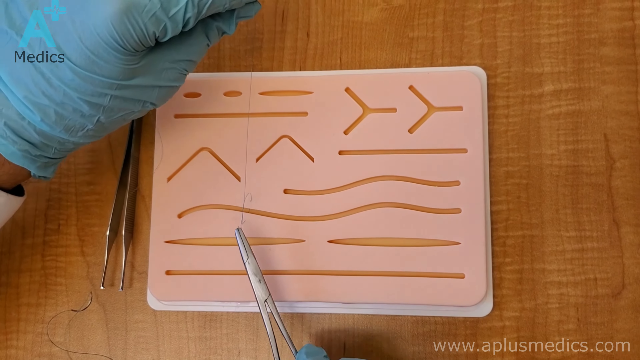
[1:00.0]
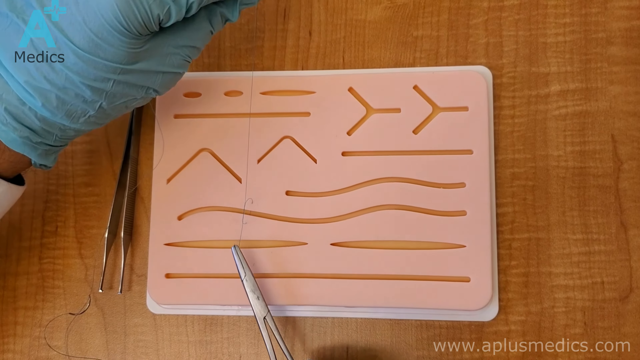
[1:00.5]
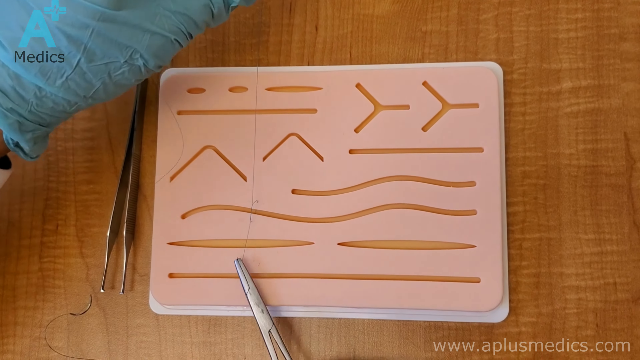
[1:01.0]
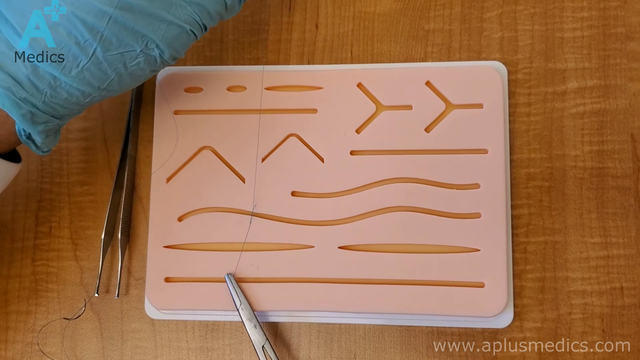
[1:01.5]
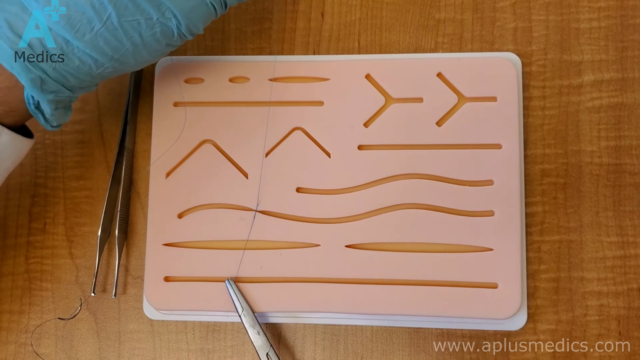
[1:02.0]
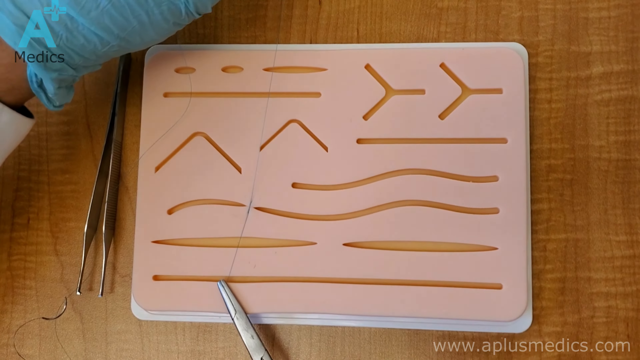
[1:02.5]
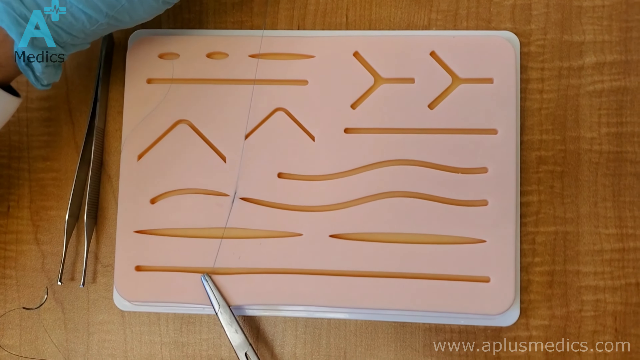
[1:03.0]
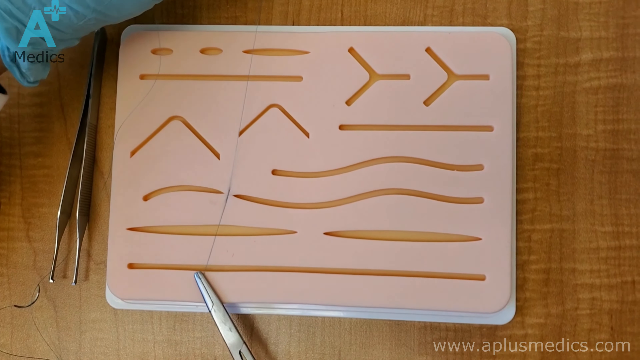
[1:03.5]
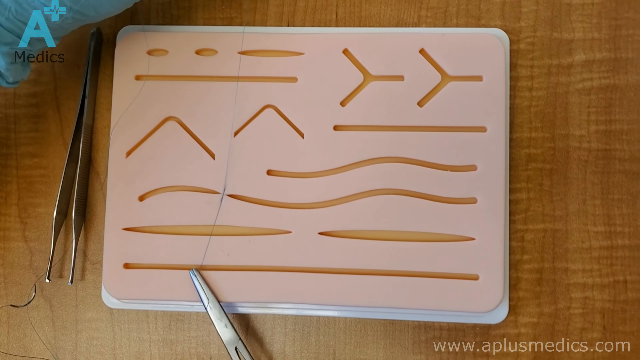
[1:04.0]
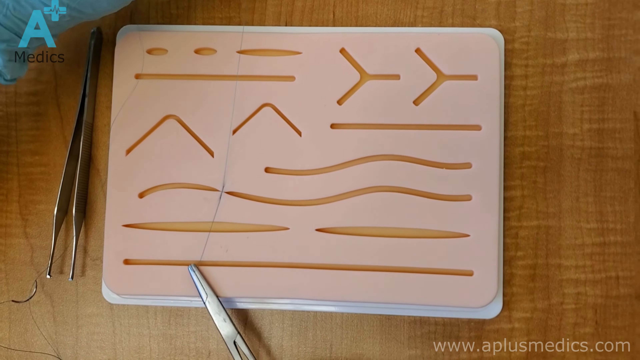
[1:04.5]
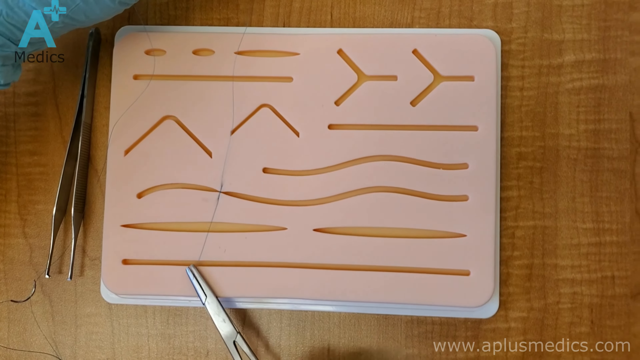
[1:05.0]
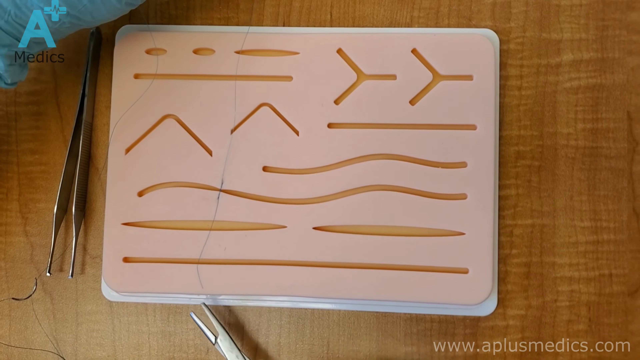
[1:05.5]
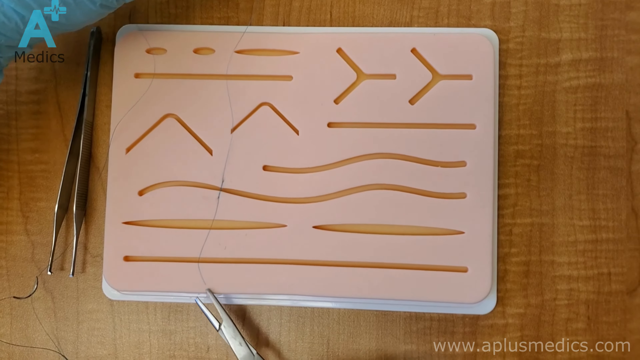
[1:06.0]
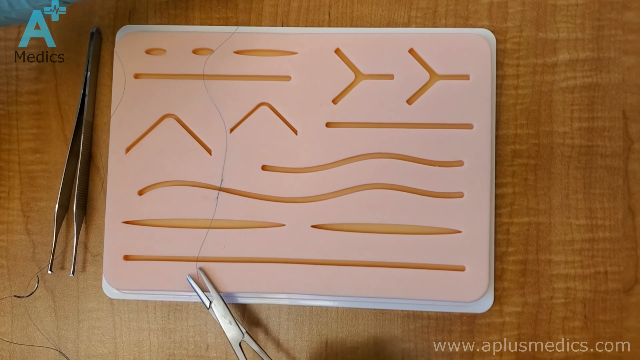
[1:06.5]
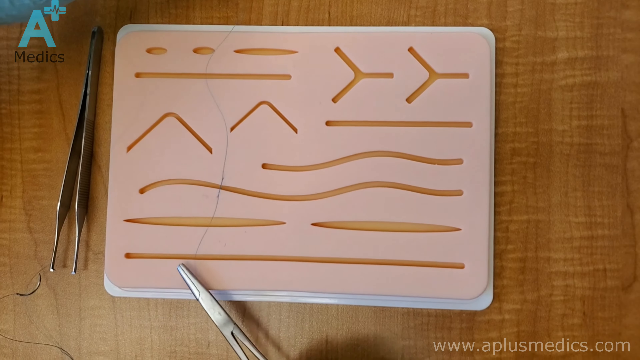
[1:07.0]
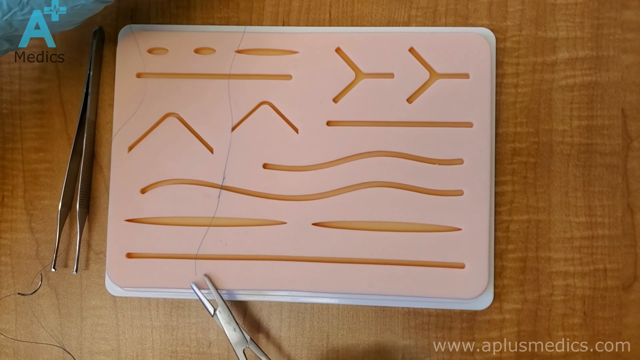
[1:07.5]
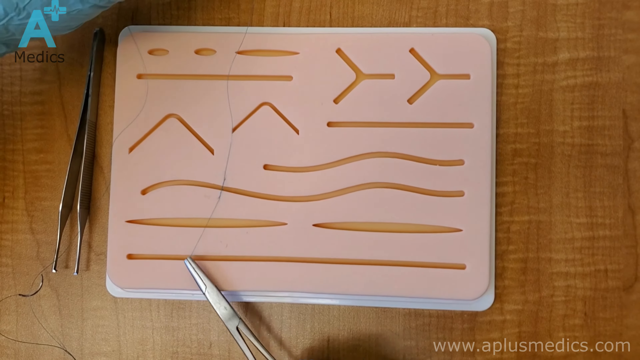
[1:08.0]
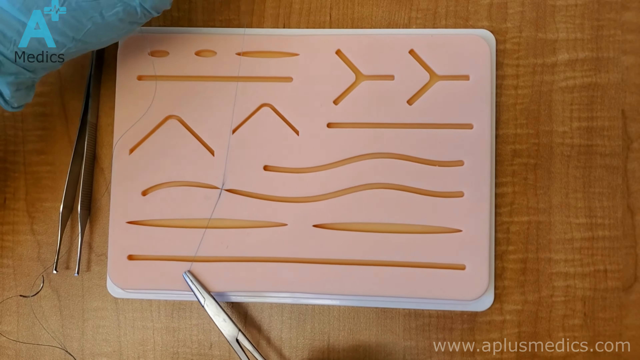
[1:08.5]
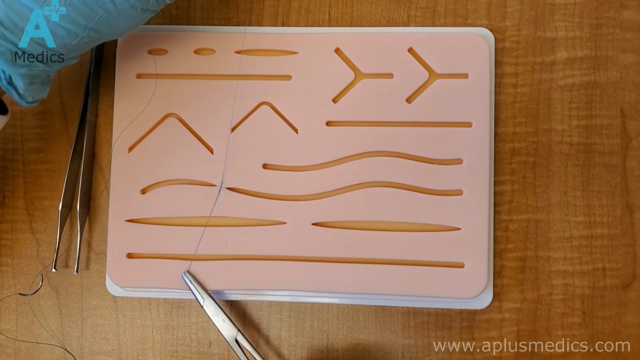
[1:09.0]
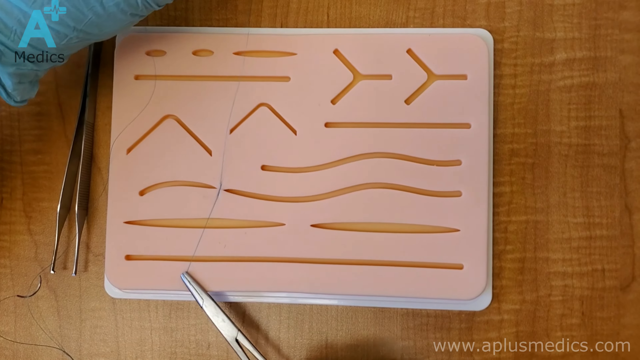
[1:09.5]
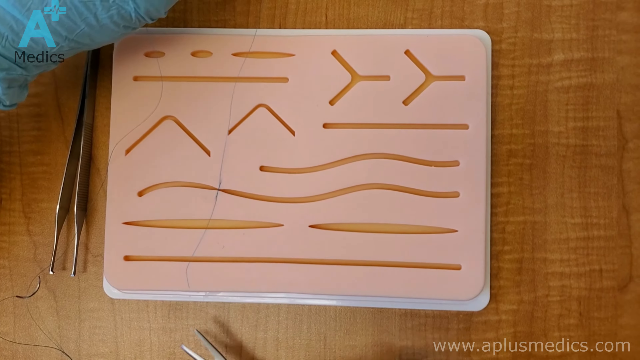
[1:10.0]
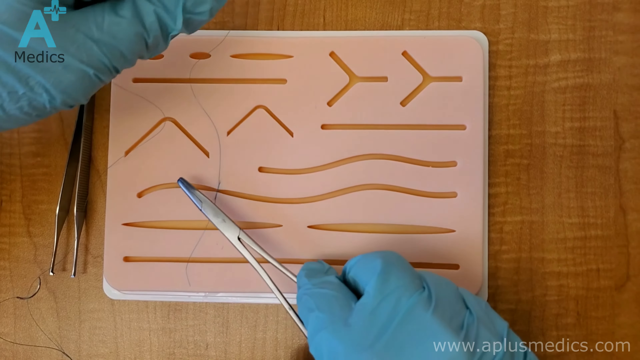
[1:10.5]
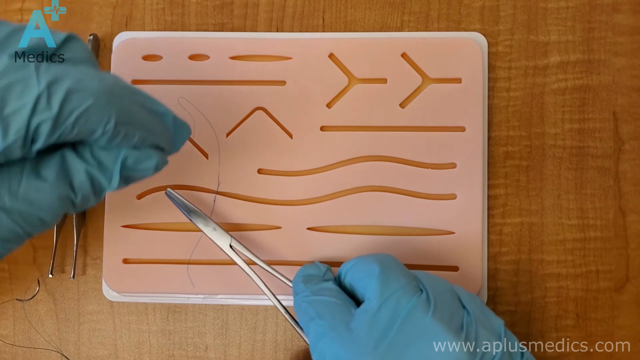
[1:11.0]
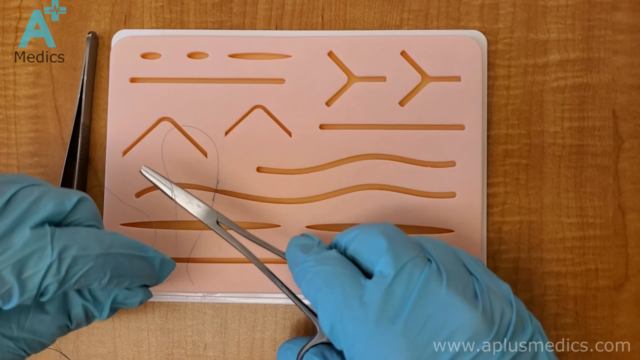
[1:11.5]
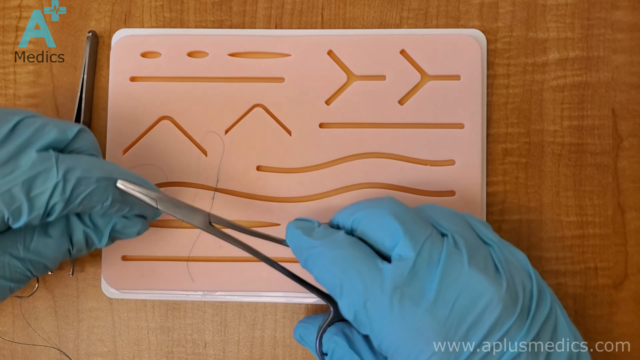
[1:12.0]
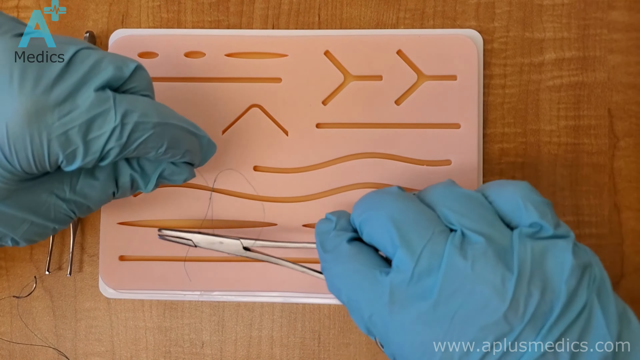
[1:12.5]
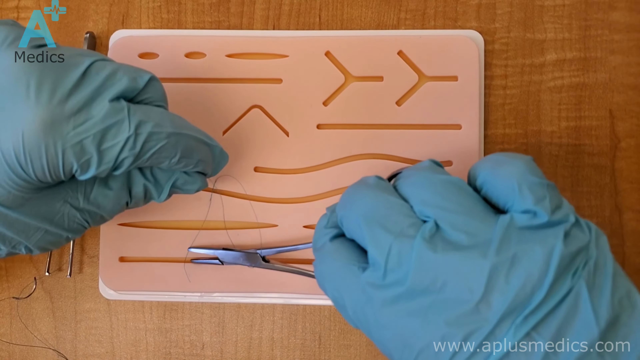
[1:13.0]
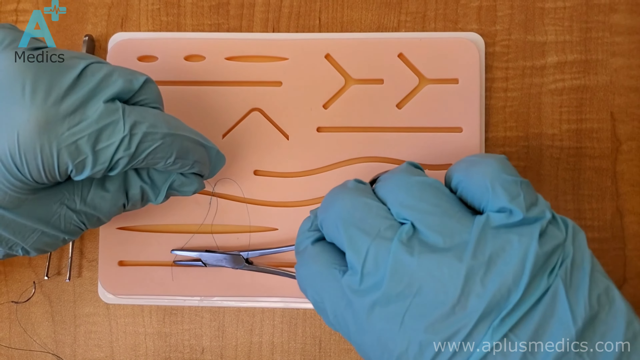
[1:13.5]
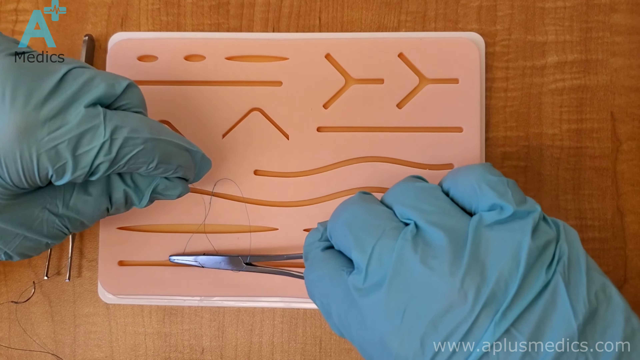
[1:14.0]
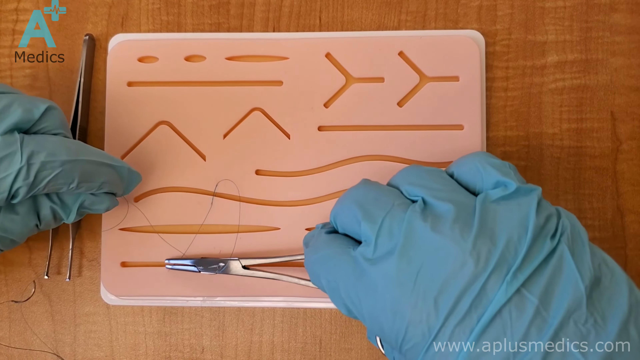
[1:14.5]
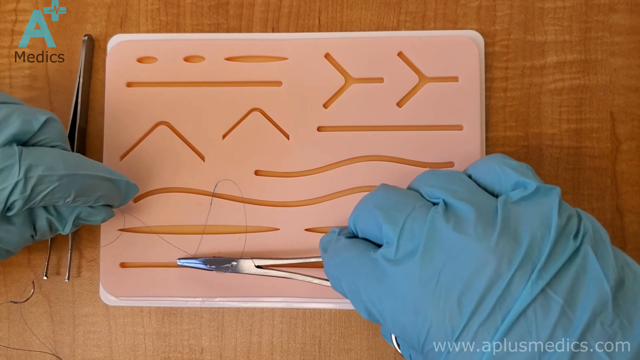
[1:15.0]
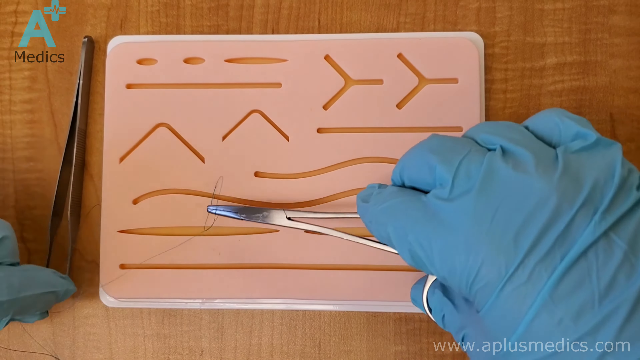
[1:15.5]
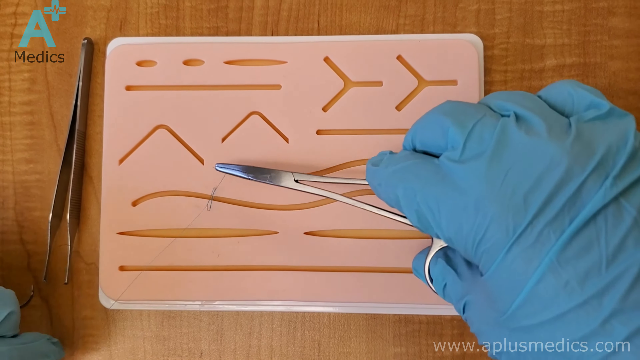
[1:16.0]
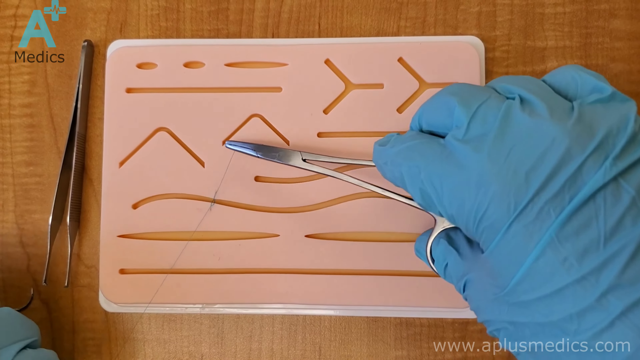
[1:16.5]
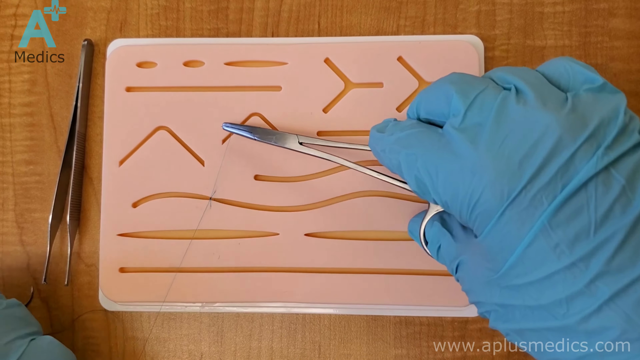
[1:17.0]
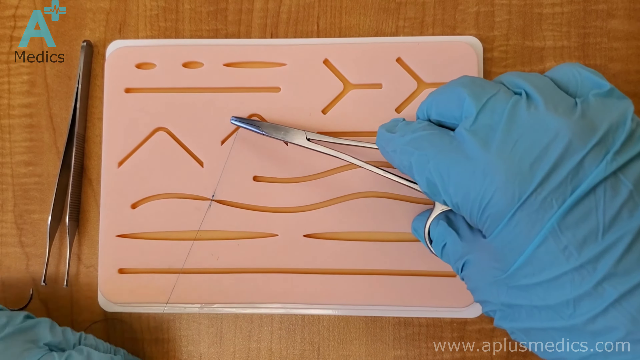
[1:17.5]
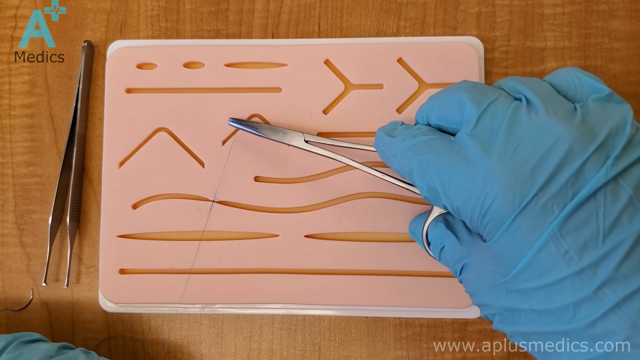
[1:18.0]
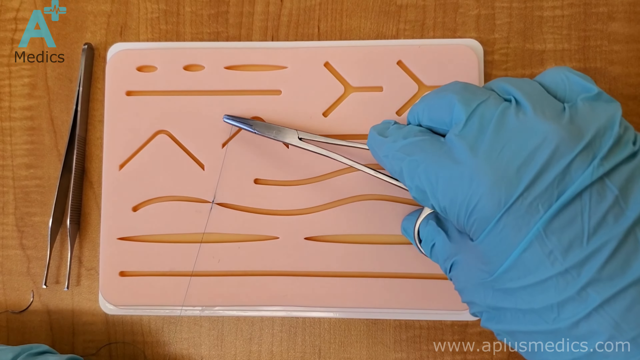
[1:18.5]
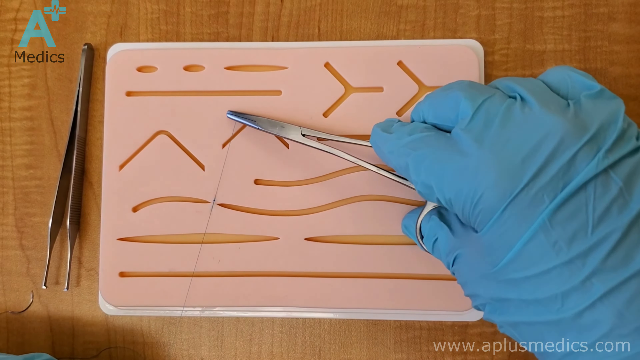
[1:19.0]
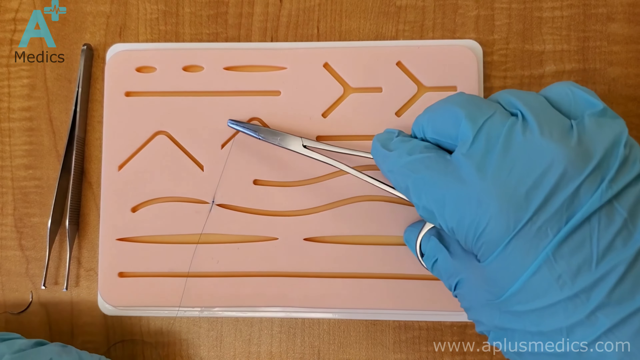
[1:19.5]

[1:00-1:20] The person continues making stitches on a horizontal practice board. The scissor holds one end of the thread, and the rest of it is above the board, off camera. The left hand then brings the thread back down toward the scissor and wraps it around the scissor, so the scissor holds one side of the thread while the person holds the other side and tightens it into a knot where the stitch would close the wound. A tiny knot is visible, and the foam of the board has been pulled together where before there was a small gap at the groove; in one little spot both sides of the groove now touch, brought together by the stitch. The tweezer is lying to the left of the board, with the handle toward the top and the tongues toward the bottom.